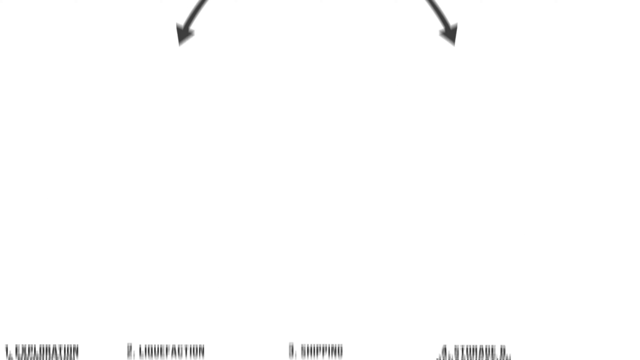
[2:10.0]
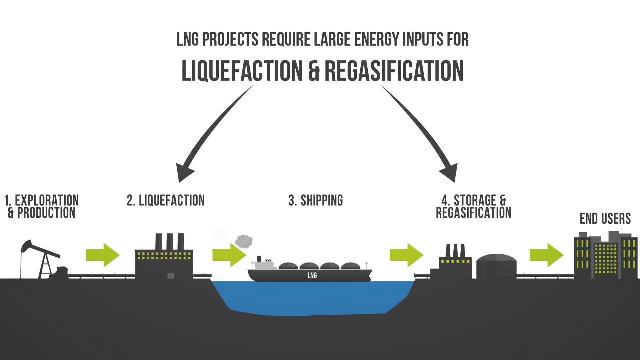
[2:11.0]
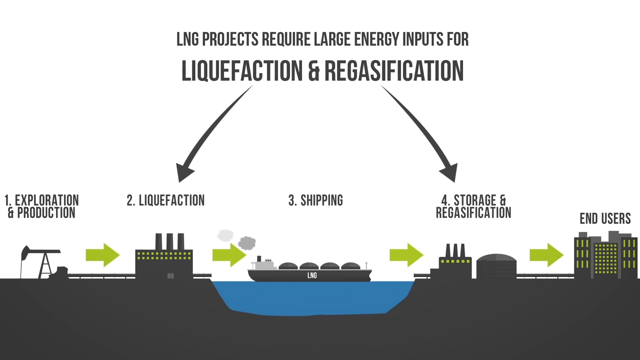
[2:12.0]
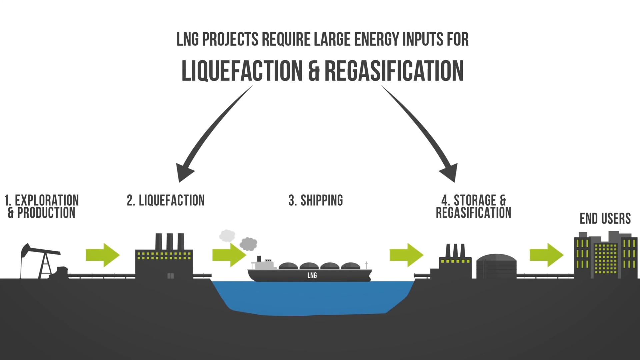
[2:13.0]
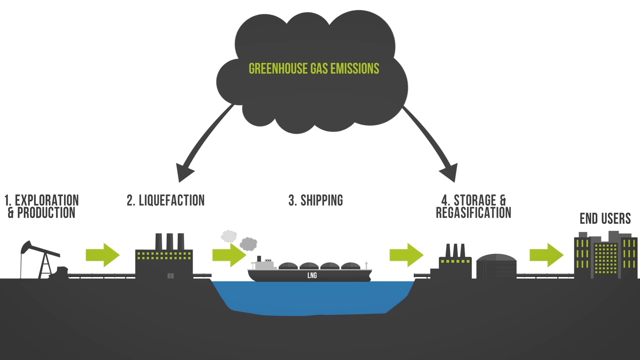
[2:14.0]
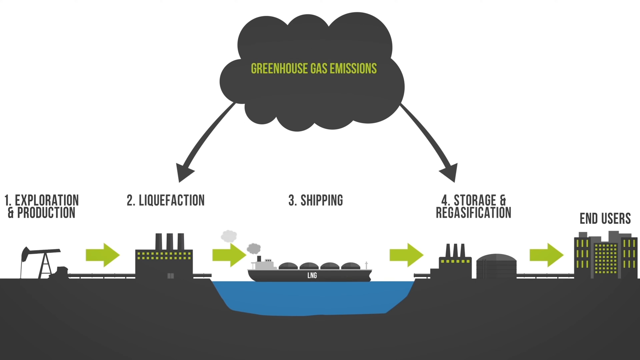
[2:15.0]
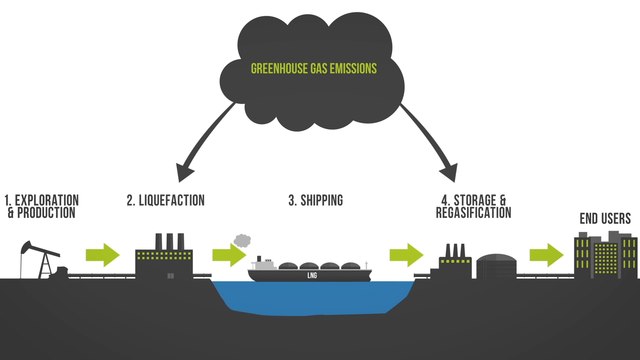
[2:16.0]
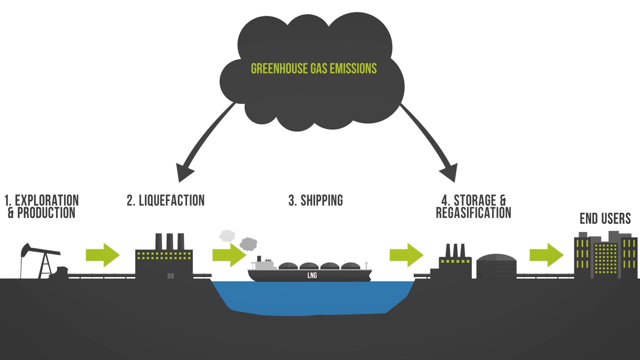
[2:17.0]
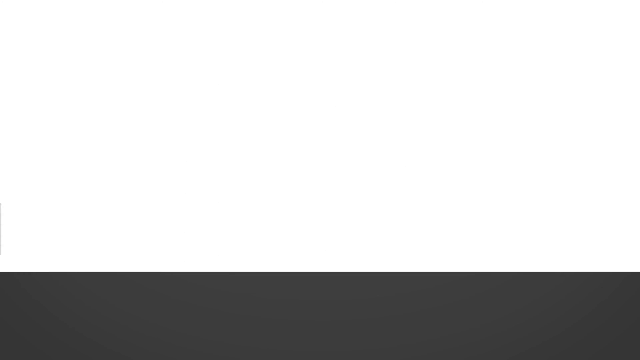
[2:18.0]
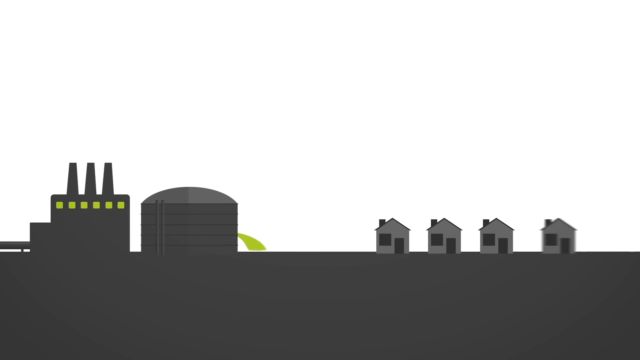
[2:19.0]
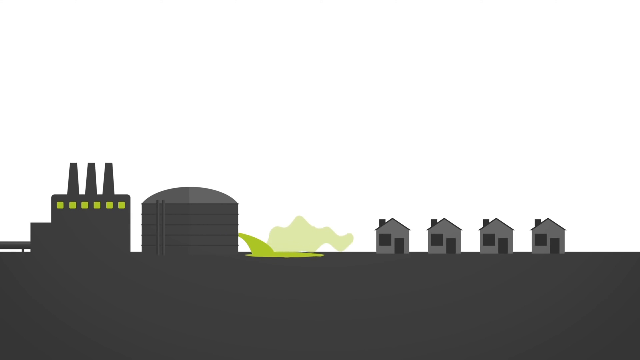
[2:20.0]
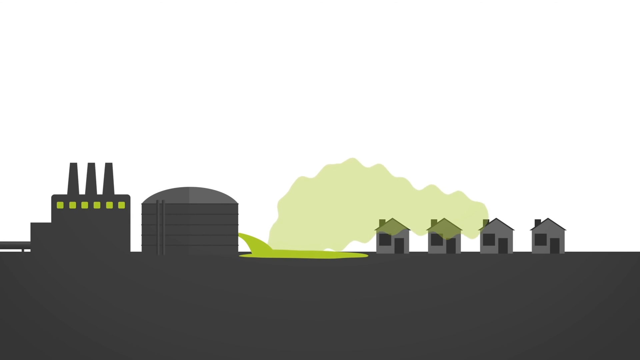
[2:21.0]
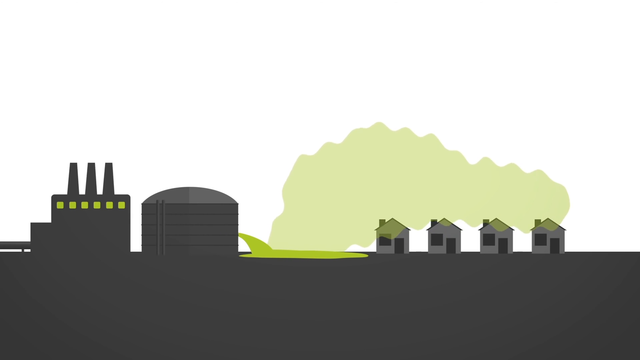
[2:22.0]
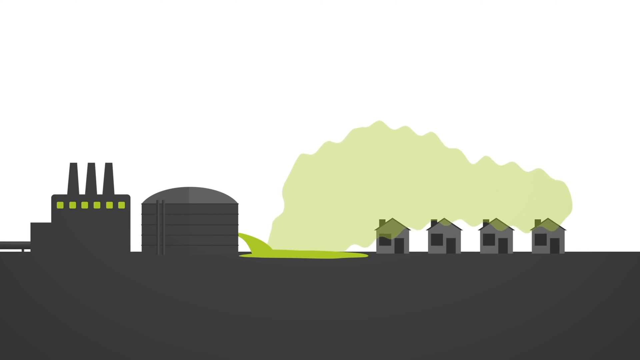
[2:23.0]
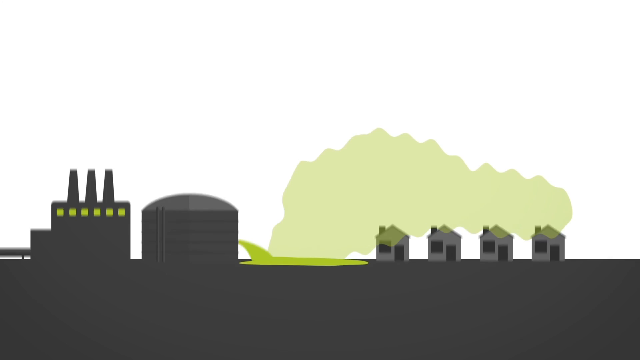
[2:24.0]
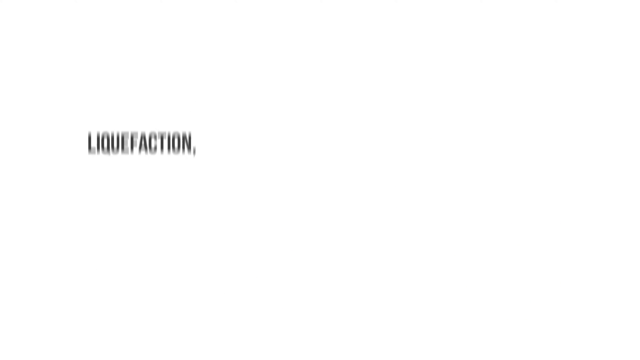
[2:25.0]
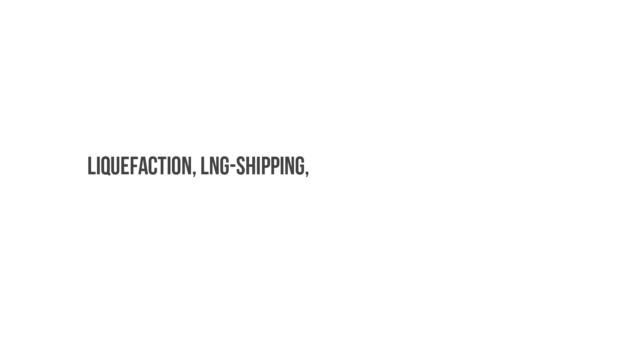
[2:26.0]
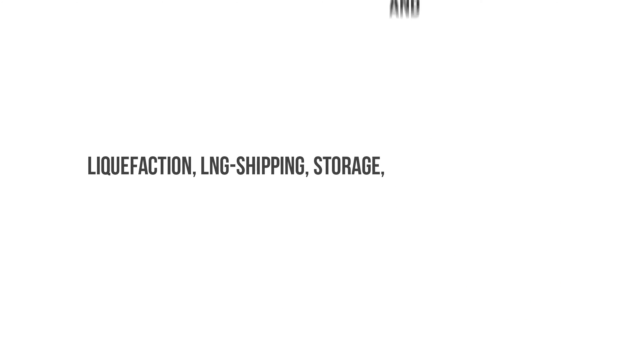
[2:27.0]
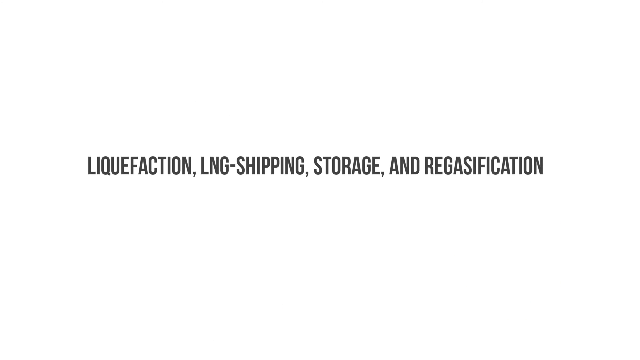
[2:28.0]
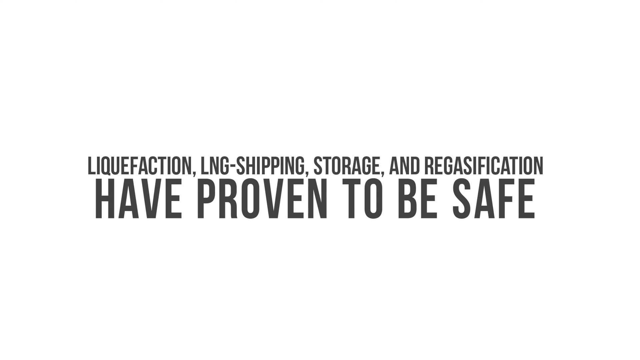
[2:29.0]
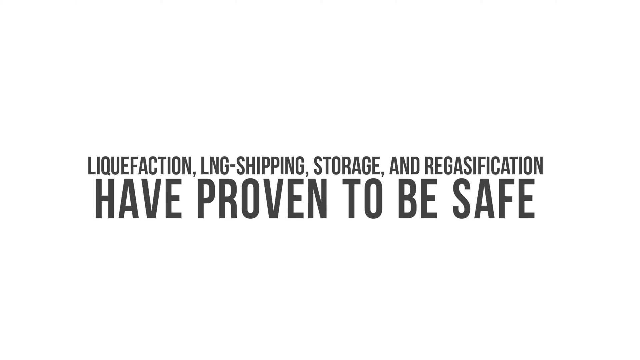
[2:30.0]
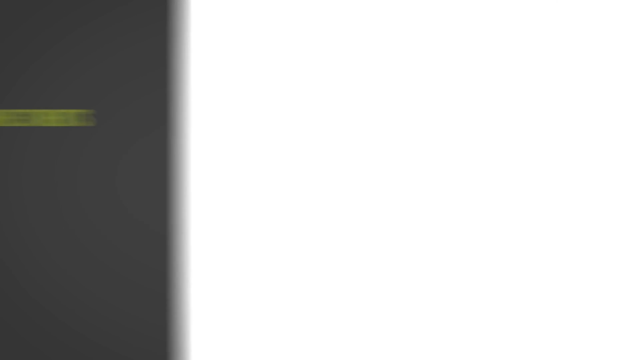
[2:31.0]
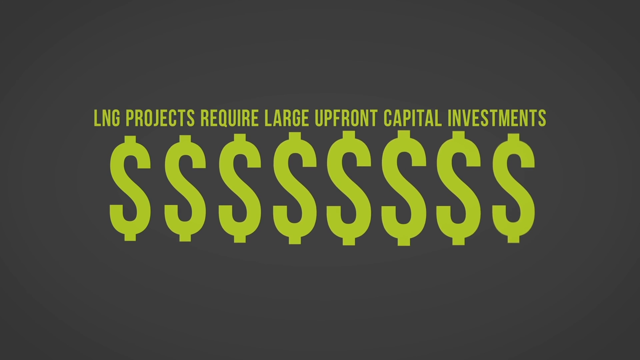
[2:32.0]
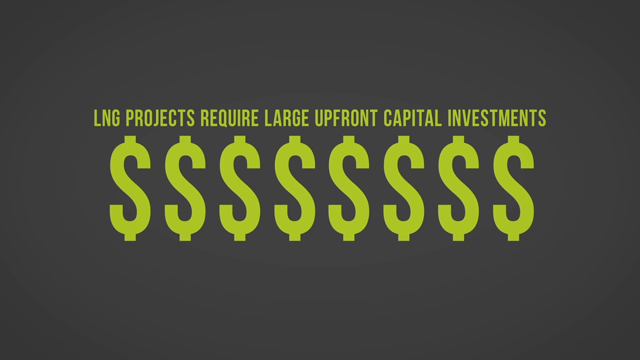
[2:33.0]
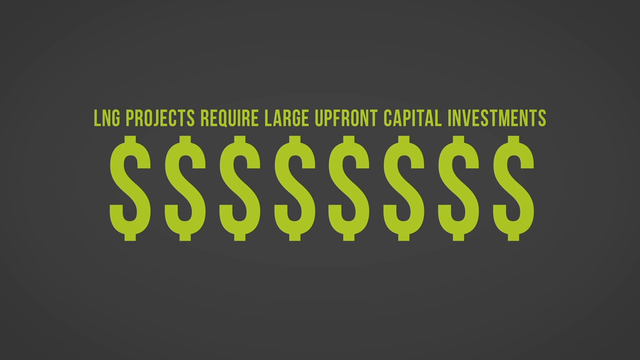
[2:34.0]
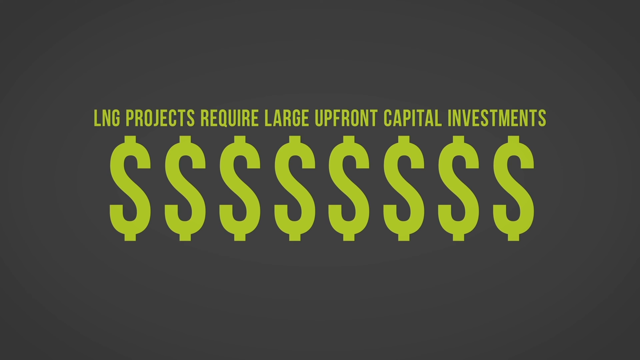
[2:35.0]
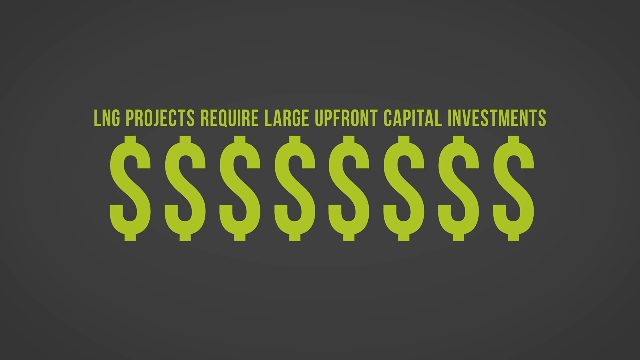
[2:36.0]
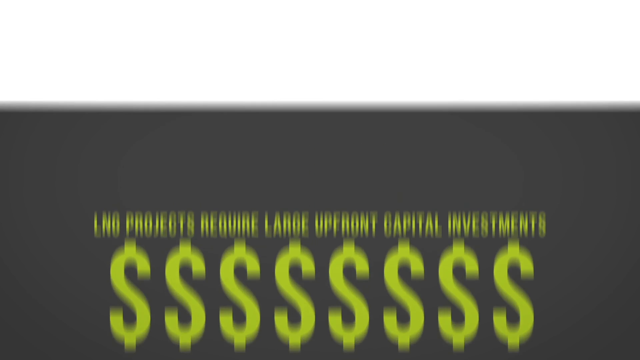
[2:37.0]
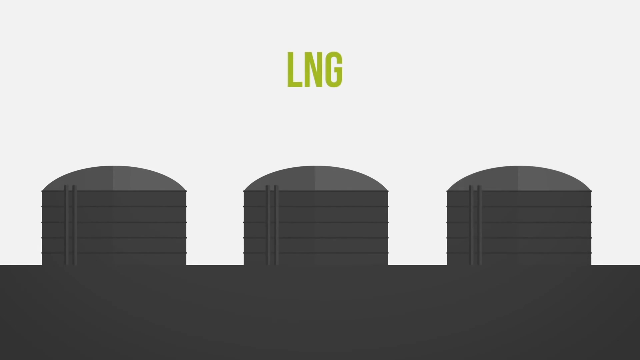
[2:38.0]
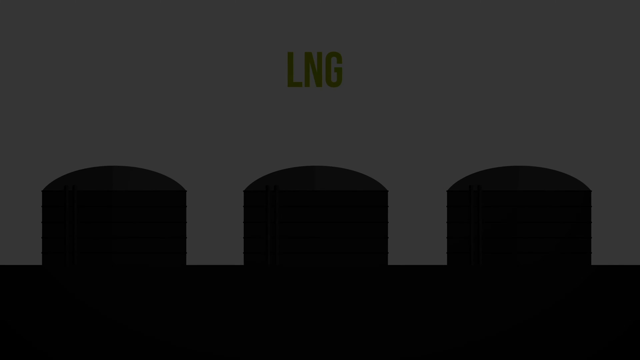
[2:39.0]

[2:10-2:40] Two arrows appear with the text "LNG projects require large energy inputs for liquidification and regasification". The steps are listed: "1" "exploration and production", "2" "liquification", "3" "shipping", "4" "storage and regasification", and finally "end users". "Greenhouse gas emissions" is marked for the liquification and regasification parts. Refineries spill some gas that drifts toward what looks like a neighborhood and fills the air, apparently representing pollution. Text reads "liquefaction, LNG shipping, storage, and regasification have proven to be safe", followed by text beginning "LNG projects require large" about capital investments, with many dollar signs shown. At the end, text about "test your knowledge" appears.